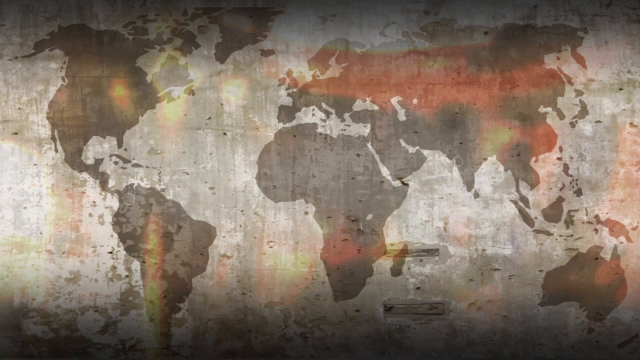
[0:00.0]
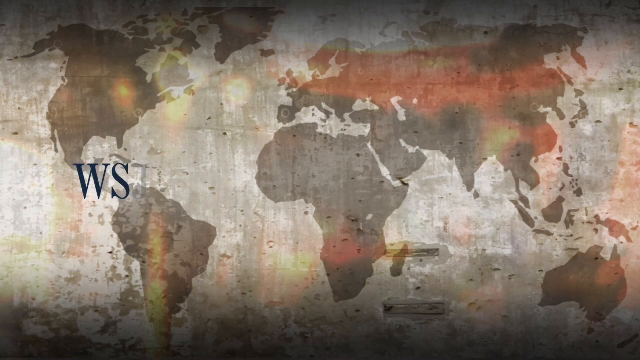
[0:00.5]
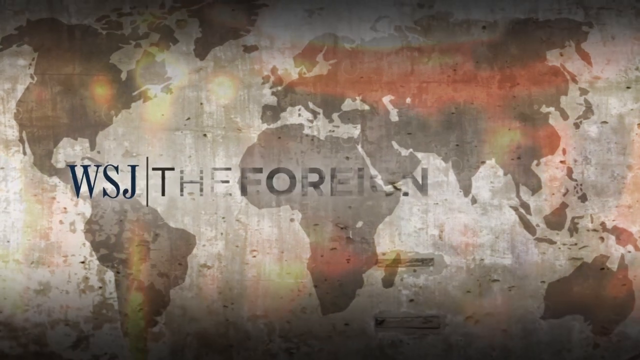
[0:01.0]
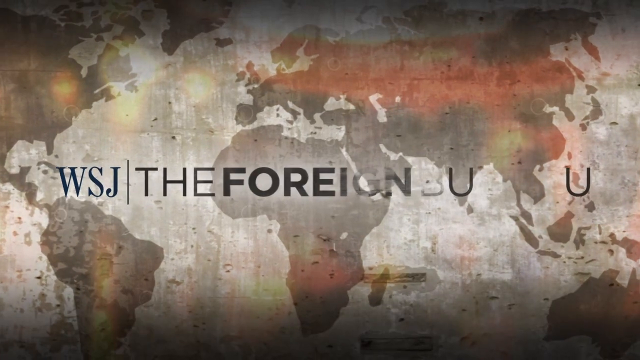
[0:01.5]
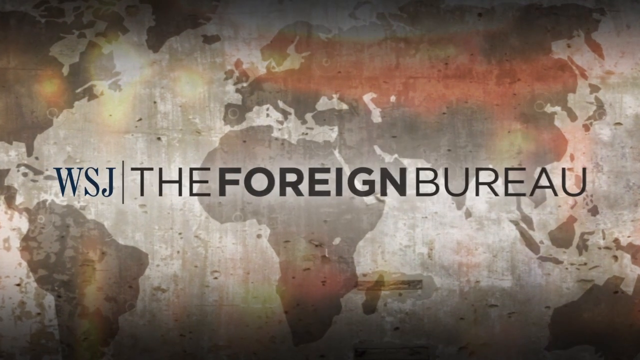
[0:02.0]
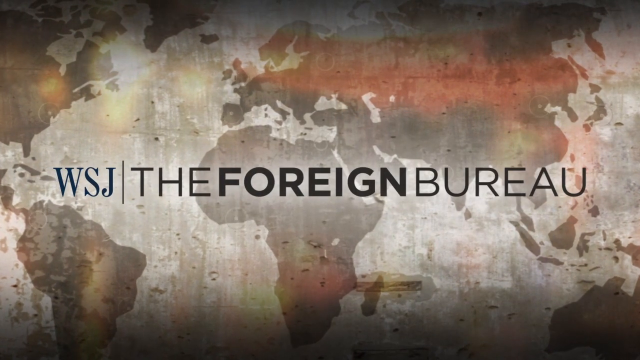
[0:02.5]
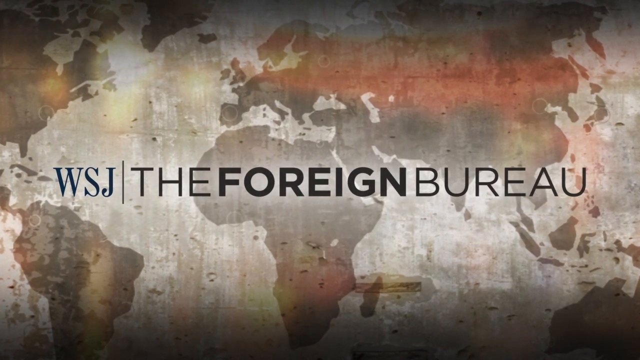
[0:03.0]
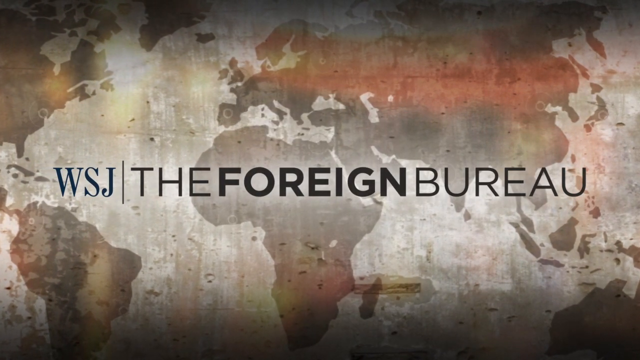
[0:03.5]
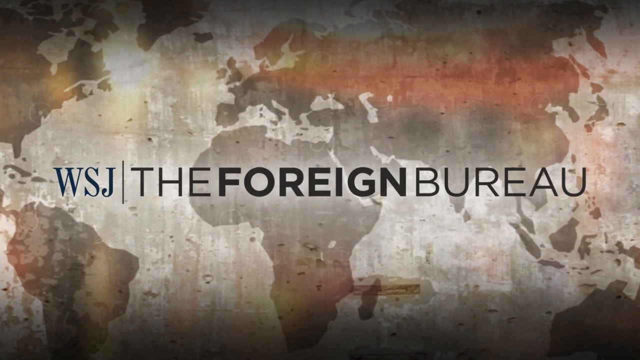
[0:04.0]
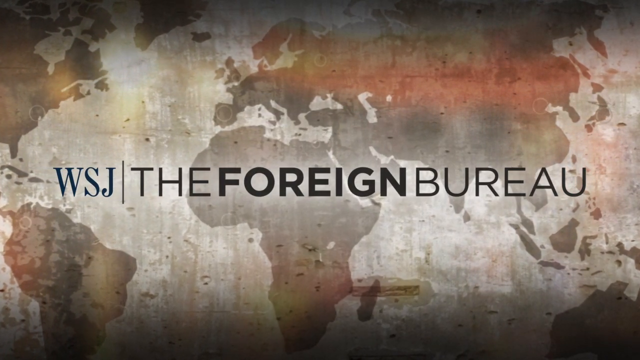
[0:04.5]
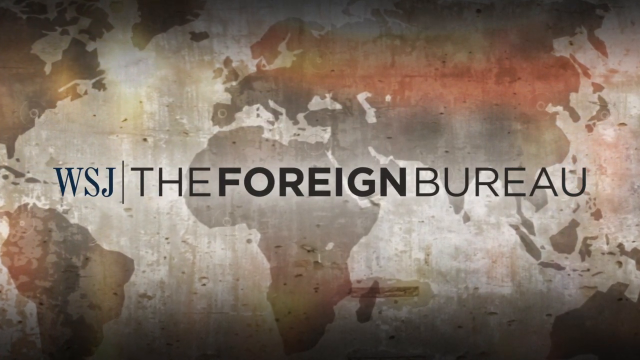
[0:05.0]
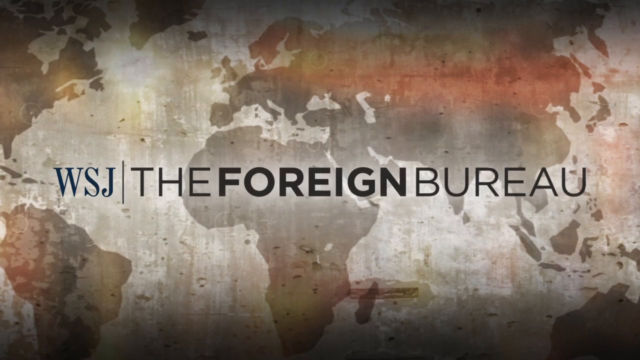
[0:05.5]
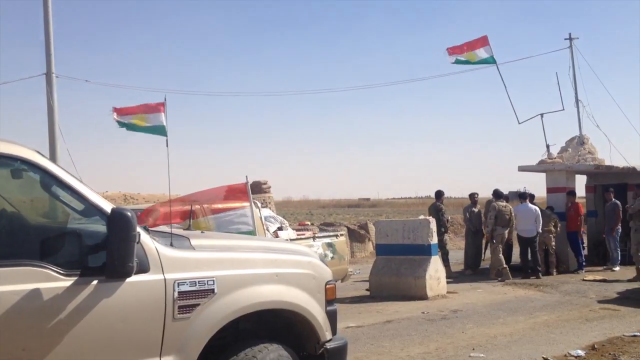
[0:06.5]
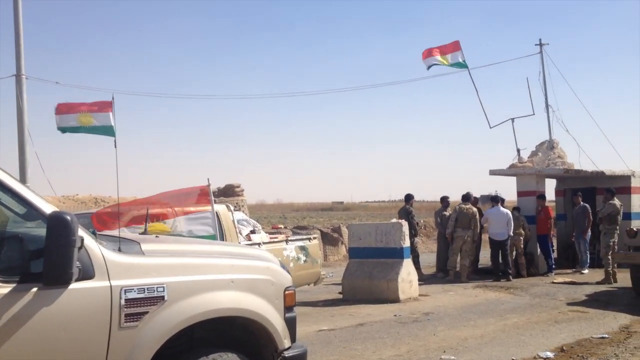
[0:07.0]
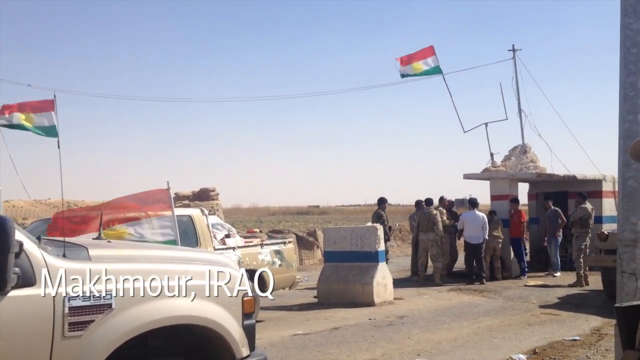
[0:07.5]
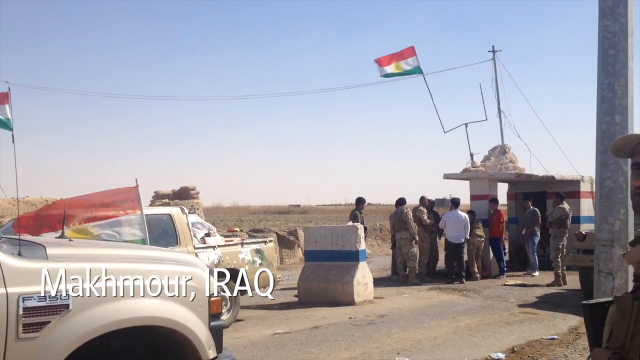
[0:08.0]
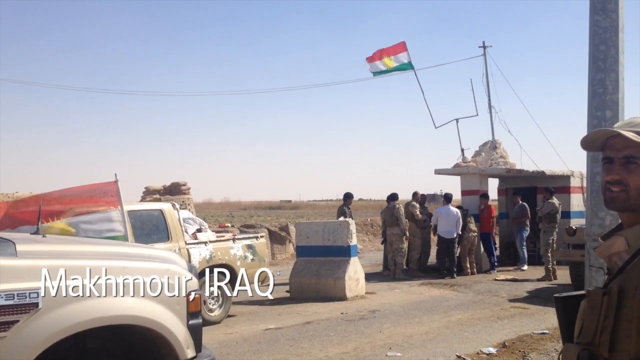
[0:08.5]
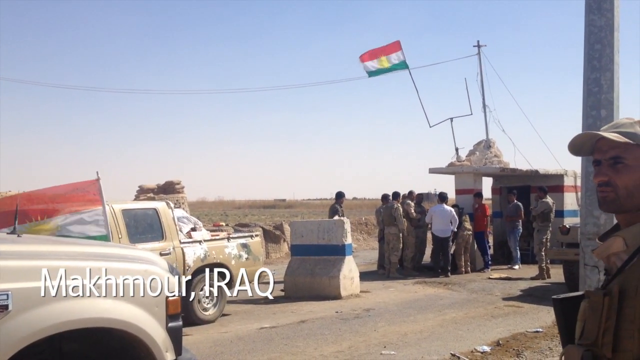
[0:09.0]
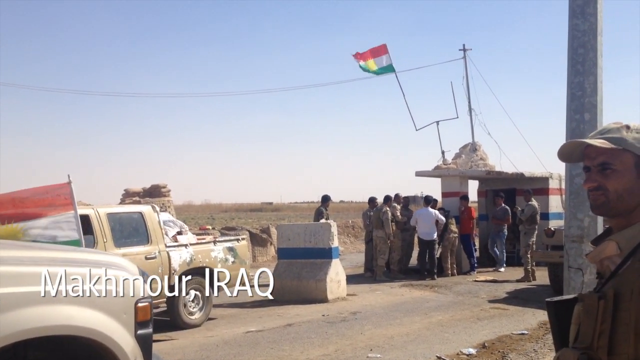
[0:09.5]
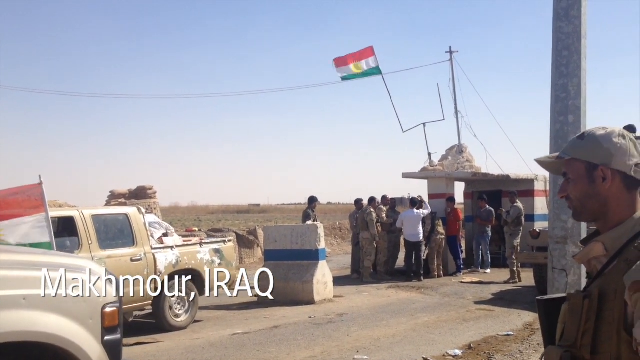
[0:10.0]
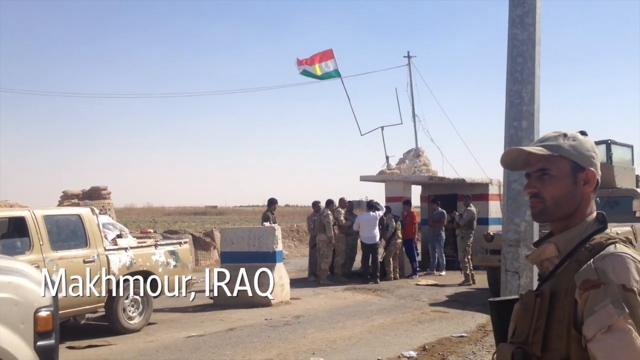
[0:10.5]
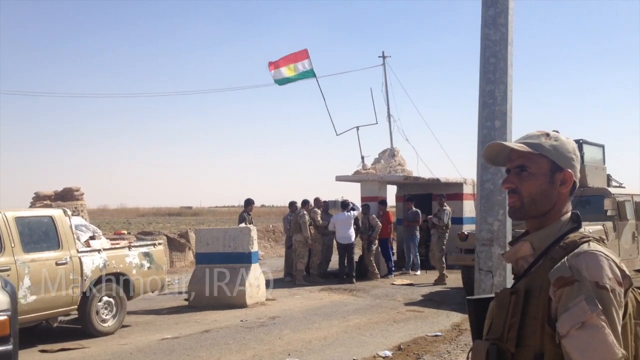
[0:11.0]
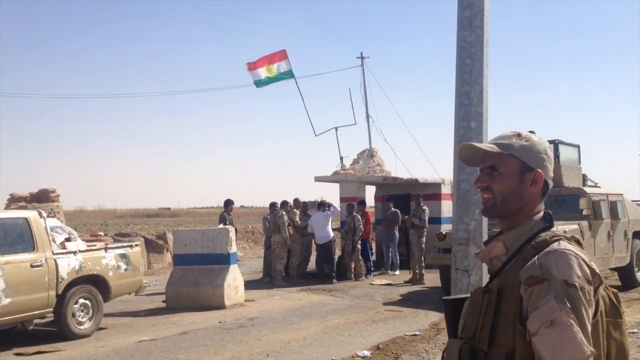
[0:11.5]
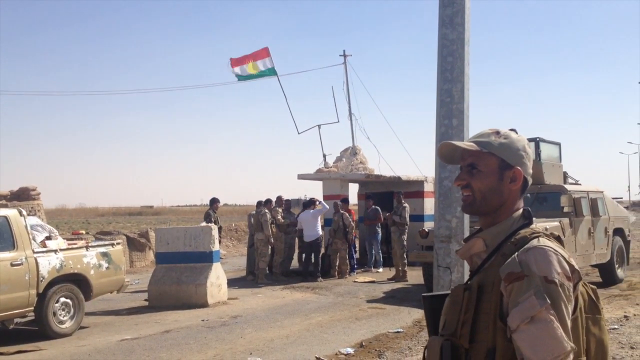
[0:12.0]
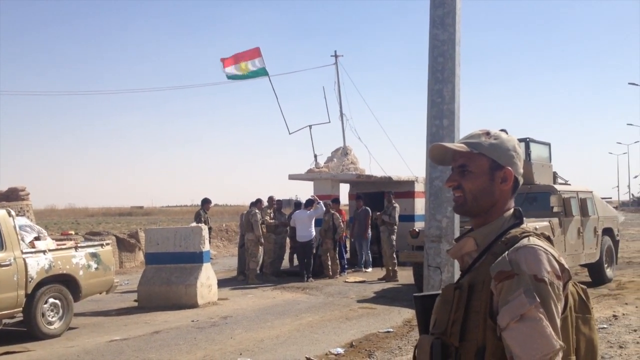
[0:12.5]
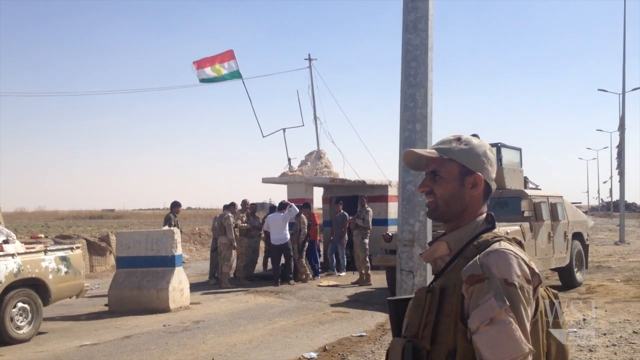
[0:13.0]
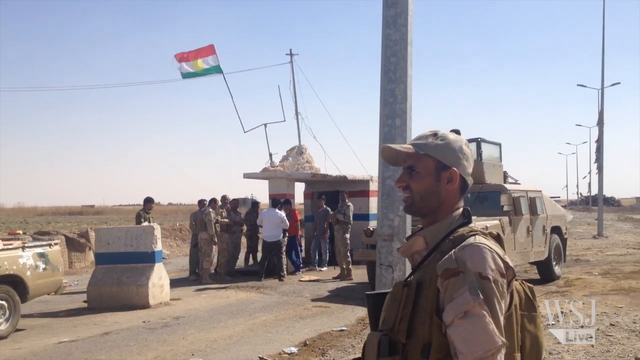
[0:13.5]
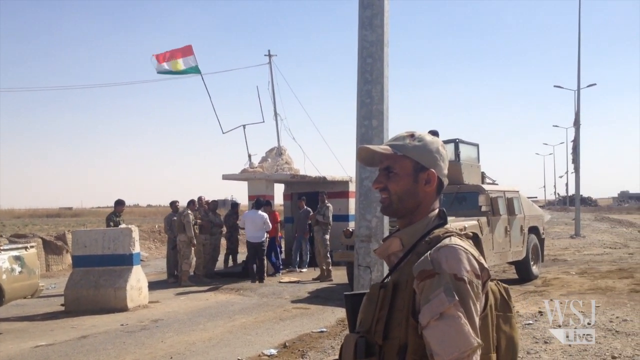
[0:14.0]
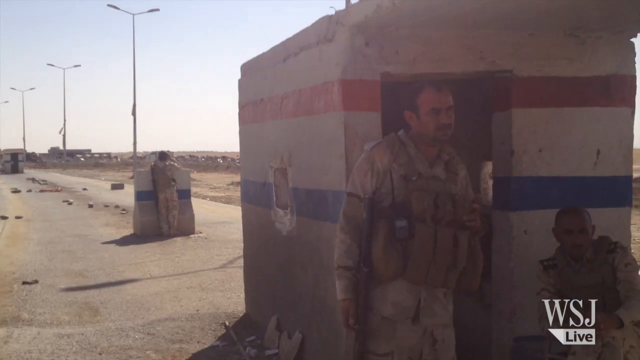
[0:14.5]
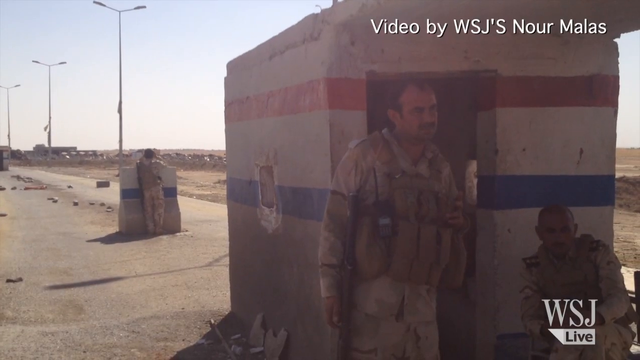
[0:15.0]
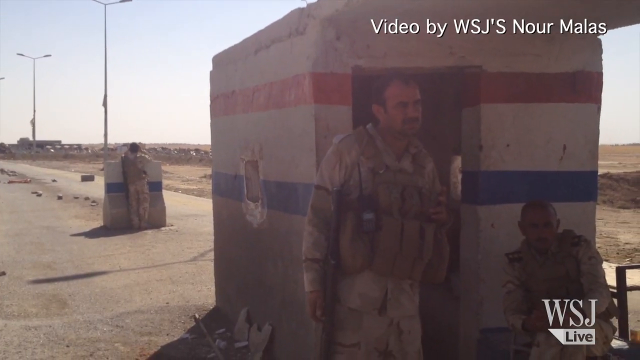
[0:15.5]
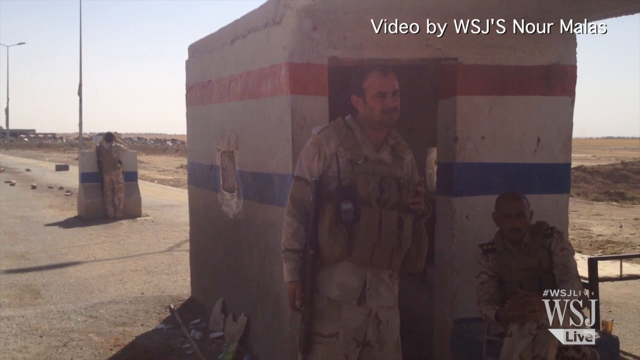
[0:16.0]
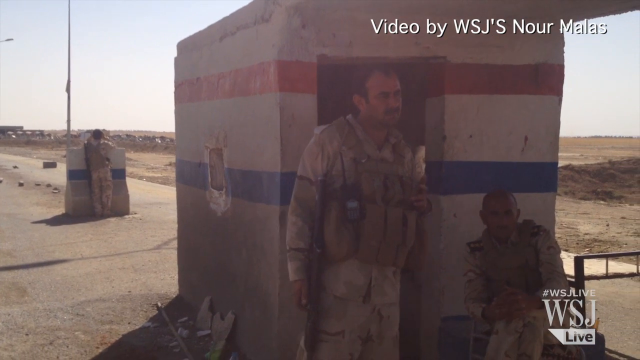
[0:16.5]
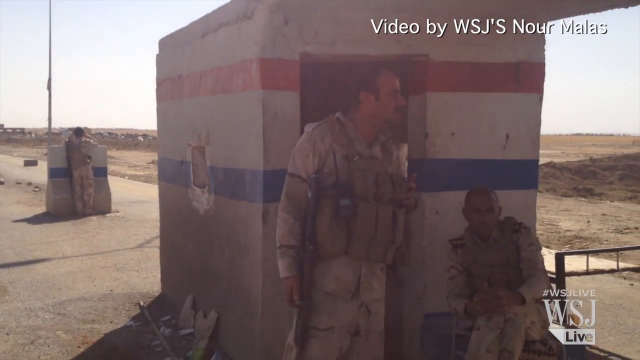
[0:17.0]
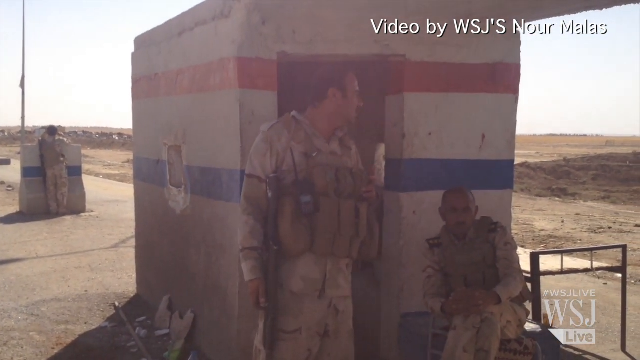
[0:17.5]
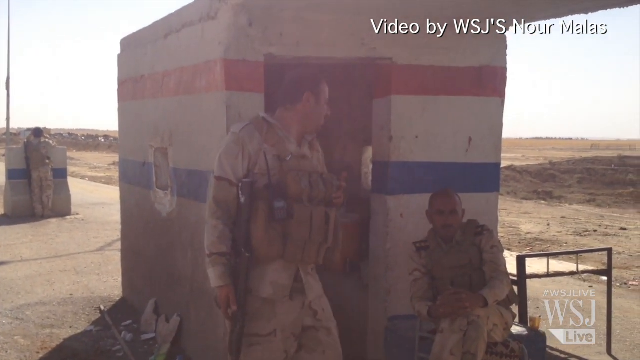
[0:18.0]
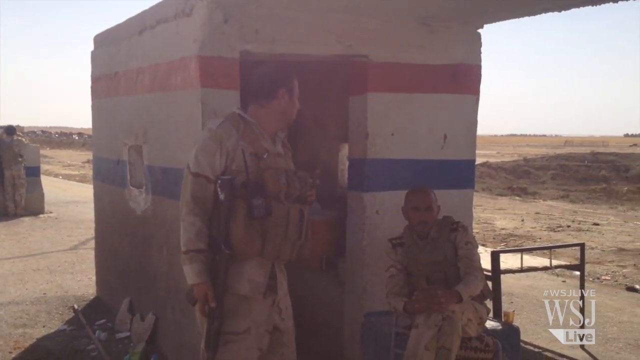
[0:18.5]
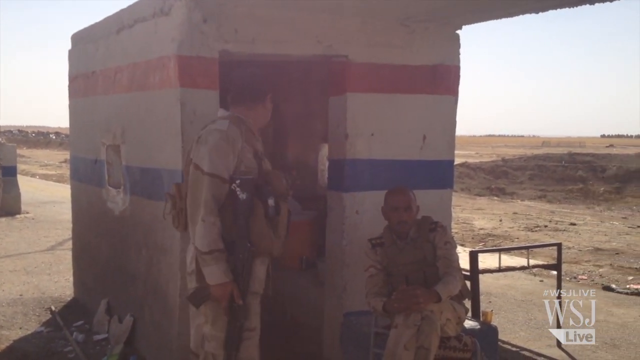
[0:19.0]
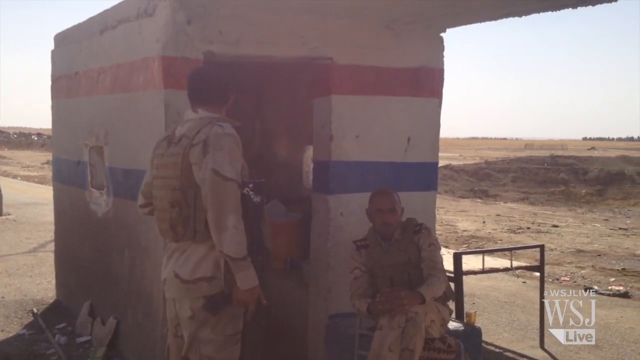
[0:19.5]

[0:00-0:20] The video opens on a map that looks rather worn, with many glares on it: a big red glare over much of Europe and Asia, and some glare down near the bottom of South America. The land masses are dark gray and the water is light gray. The view zooms in a little around the top of Africa, where black text across the center reads "WSJ", followed by a vertical line and "THE FOREIGN BUREAU", all in black capital letters. The video then cuts to footage of a line of people in the background, in front of a small white building on the right with a red and blue stripe on it. White text in the bottom left reads "Makhmur, Iraq". As the camera pans to the right, a man comes into the frame in the lower right corner, facing left and wearing a tan baseball cap and tan clothes.